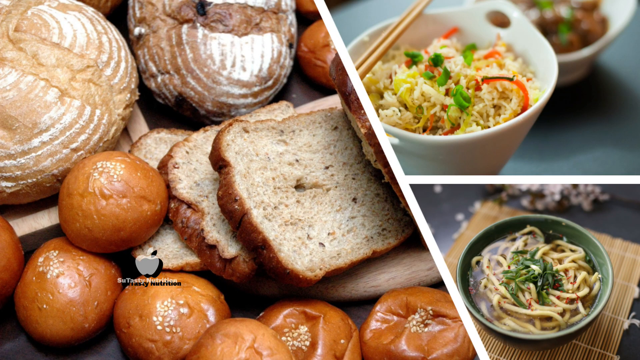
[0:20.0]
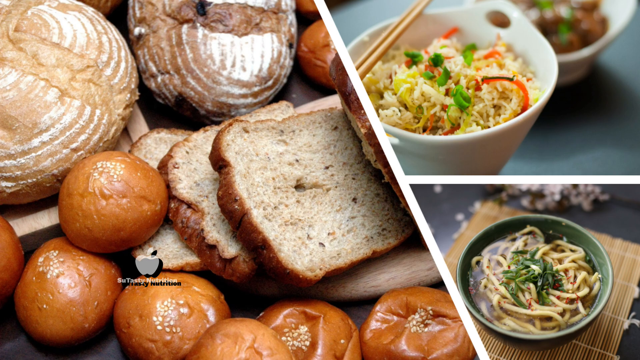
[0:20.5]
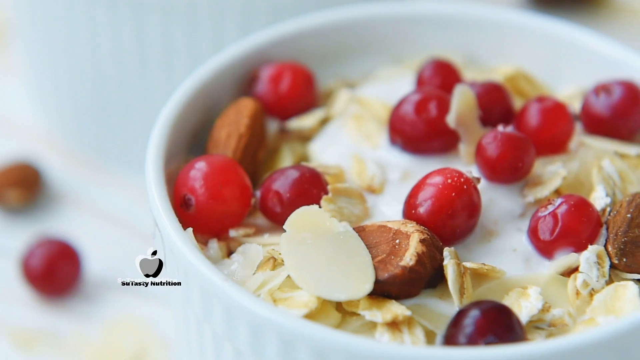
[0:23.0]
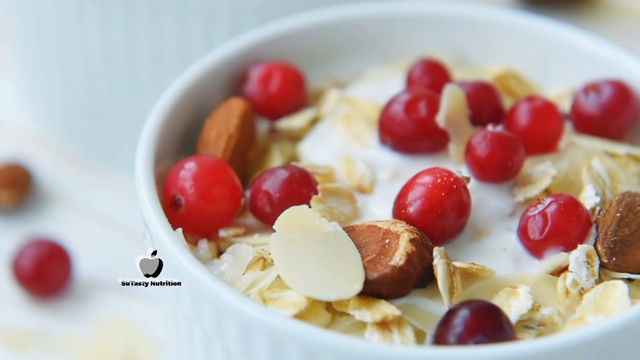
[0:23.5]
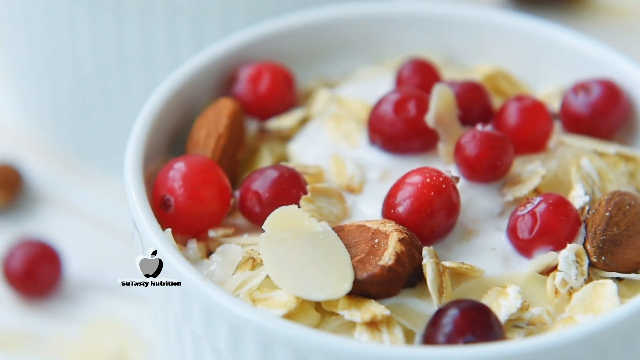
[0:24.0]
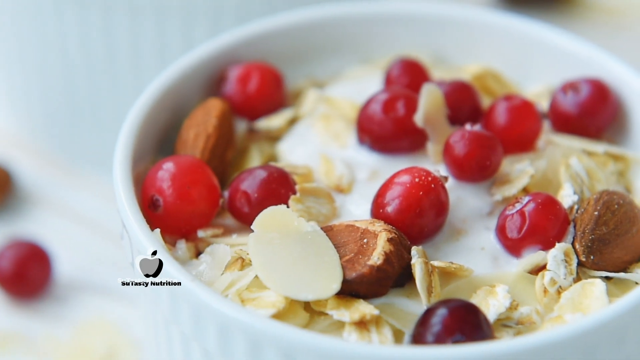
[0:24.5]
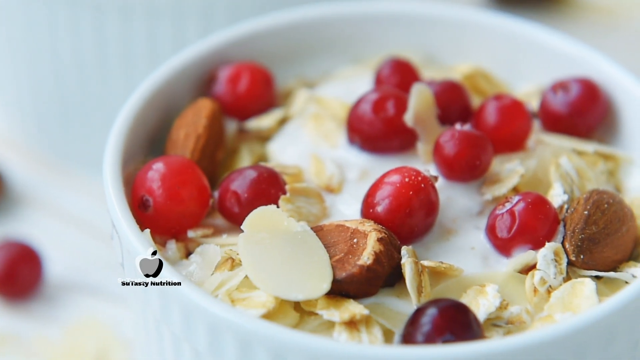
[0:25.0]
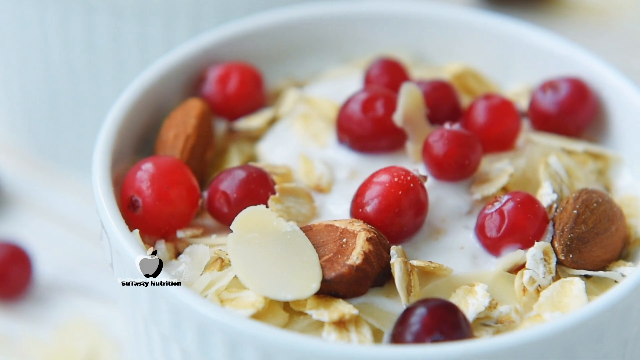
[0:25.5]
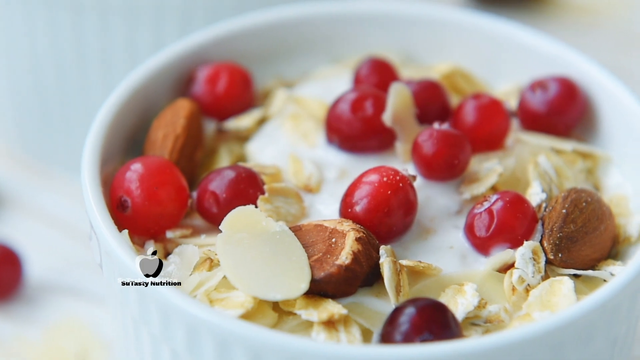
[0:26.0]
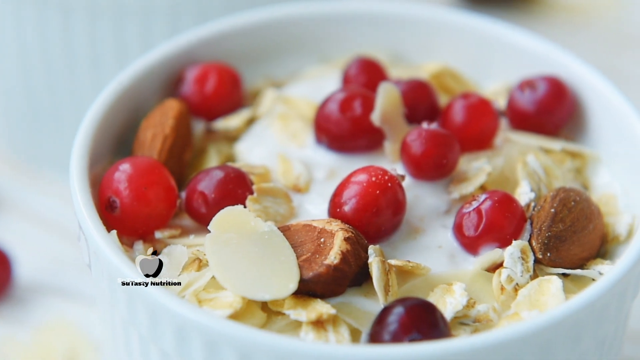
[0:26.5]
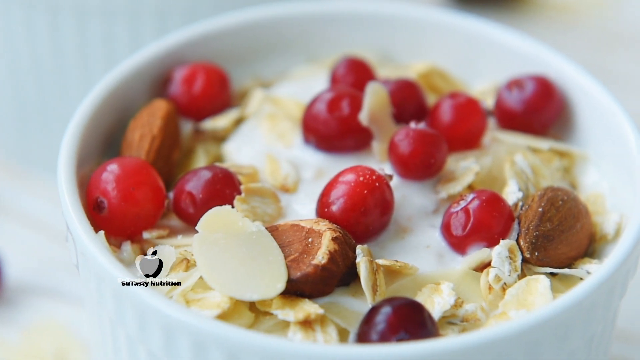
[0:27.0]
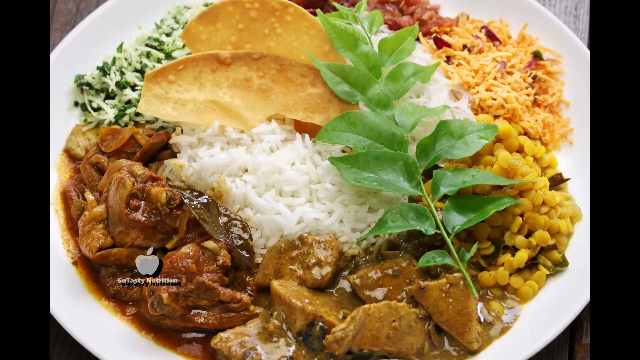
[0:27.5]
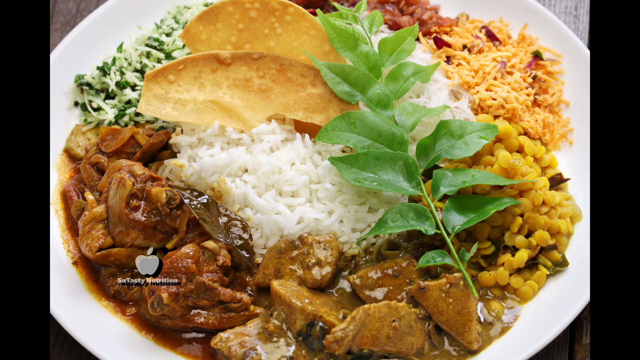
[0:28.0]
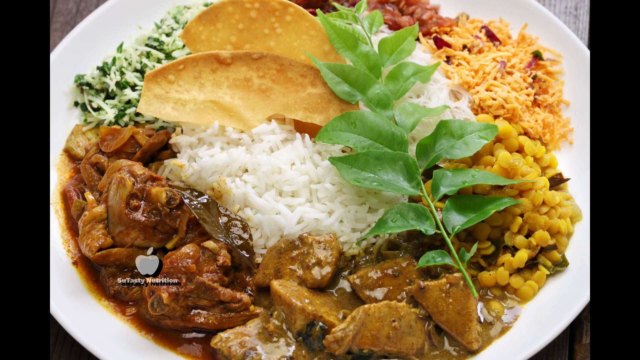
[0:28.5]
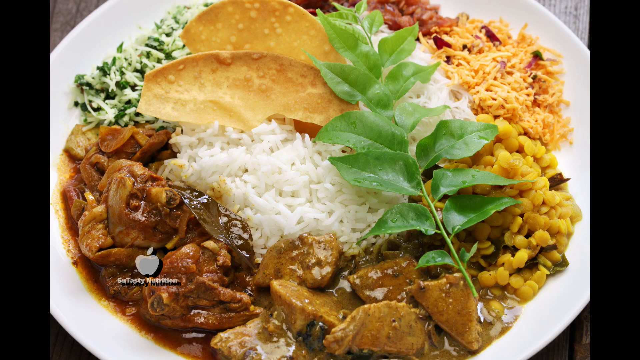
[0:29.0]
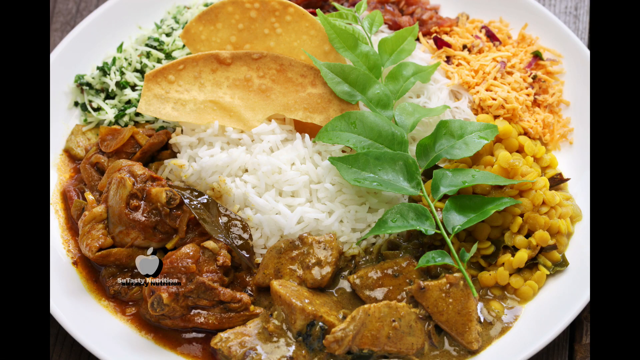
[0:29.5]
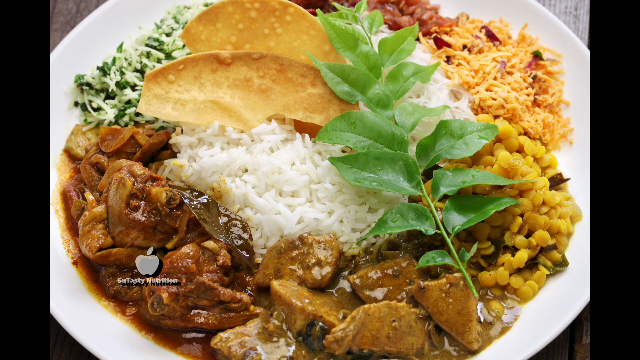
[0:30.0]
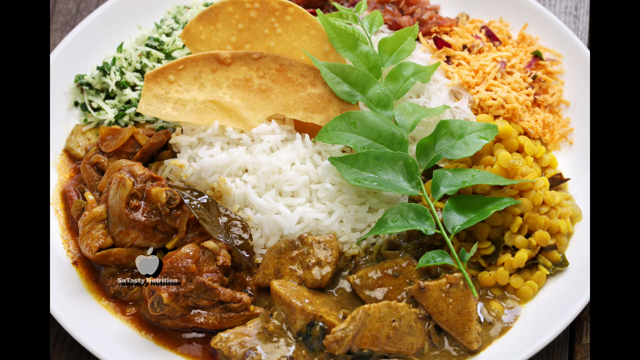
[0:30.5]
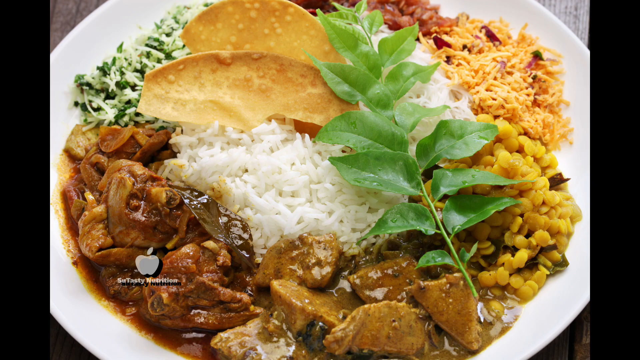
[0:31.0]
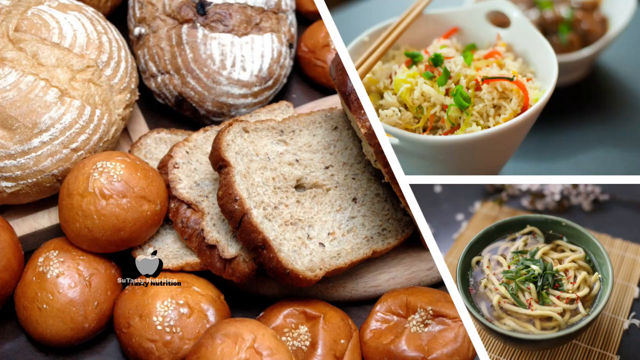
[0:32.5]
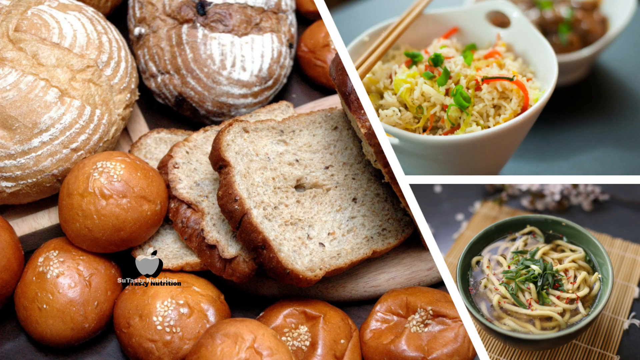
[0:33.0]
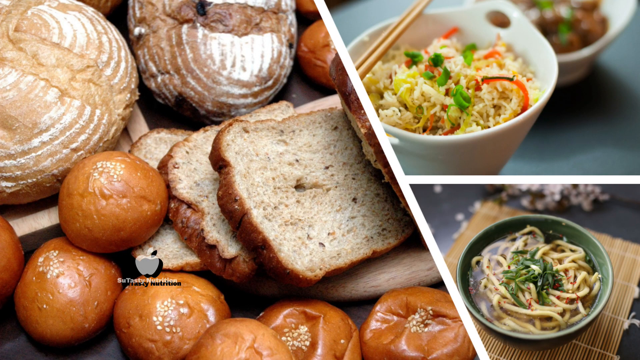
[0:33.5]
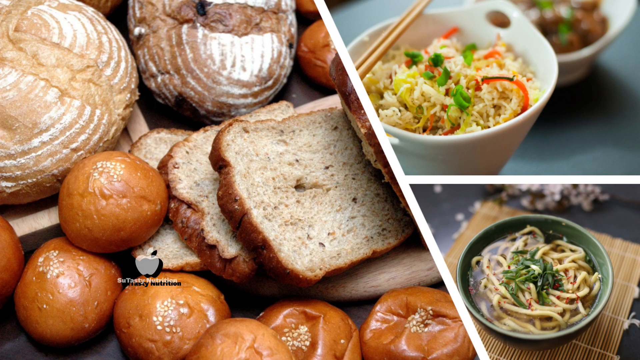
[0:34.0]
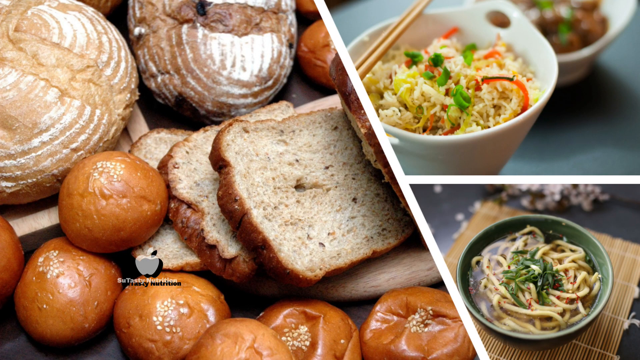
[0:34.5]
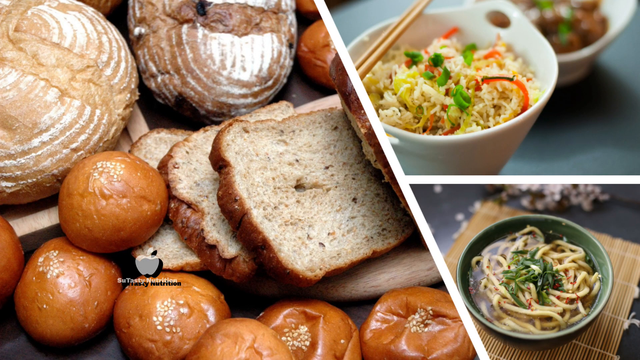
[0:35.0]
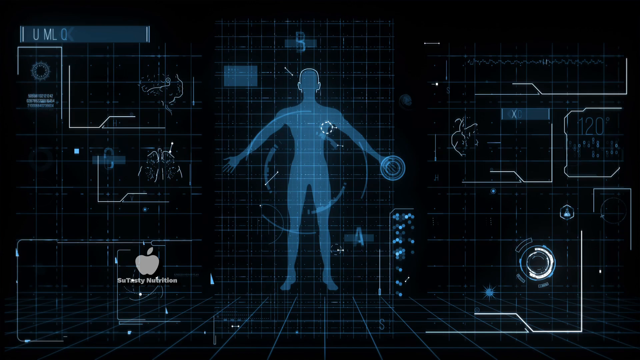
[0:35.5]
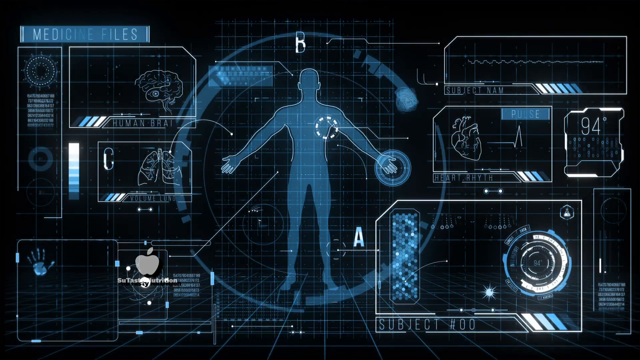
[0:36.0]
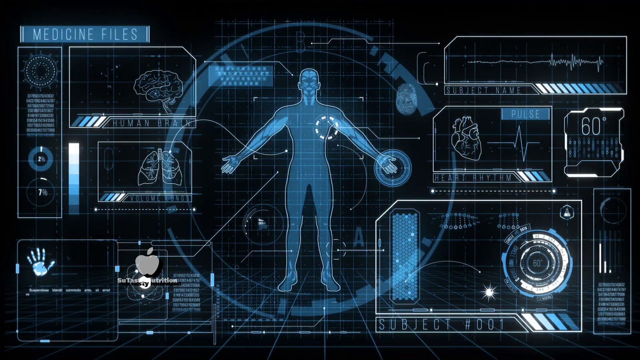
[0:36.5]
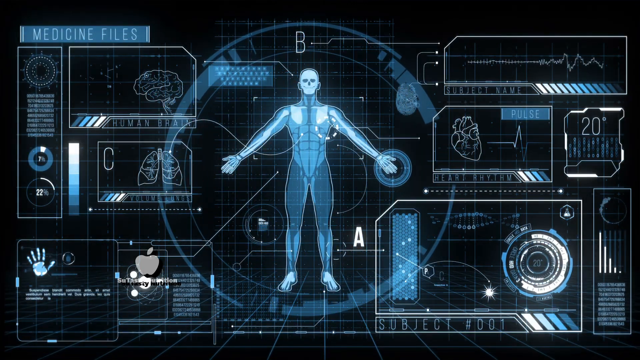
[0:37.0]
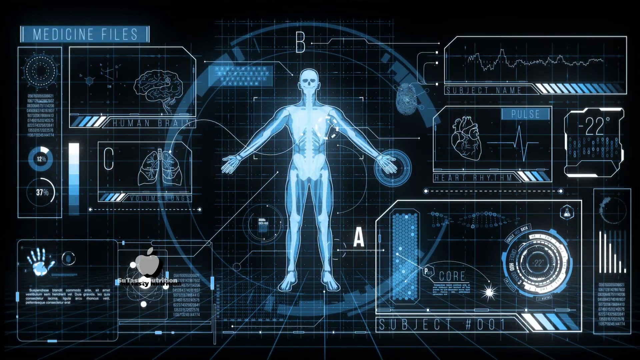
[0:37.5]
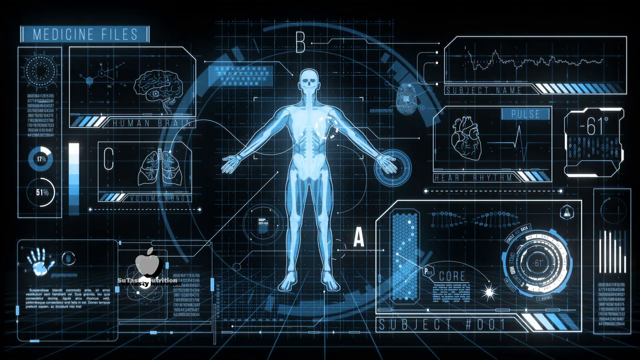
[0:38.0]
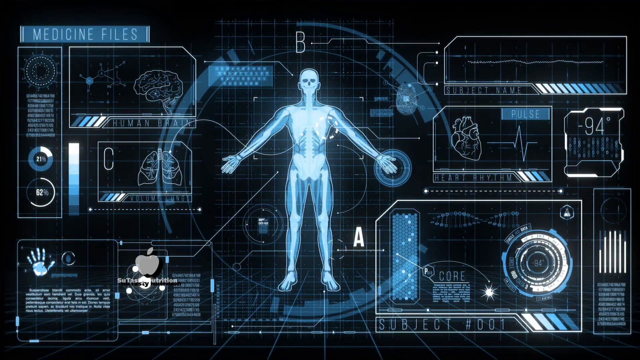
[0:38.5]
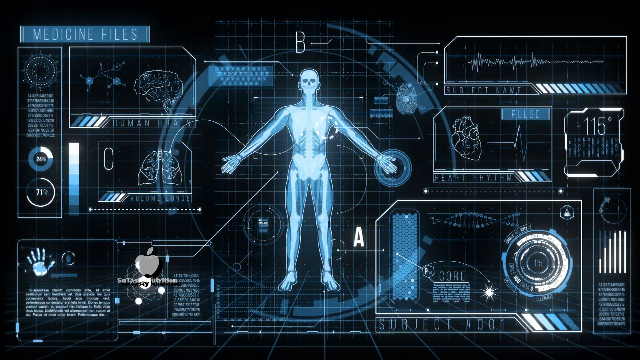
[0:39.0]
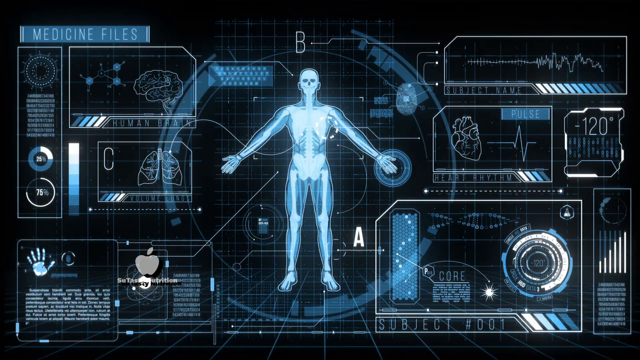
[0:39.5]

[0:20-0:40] A slide shows more carb-rich foods: breads and rolls, a bowl of rice and a bowl of noodles. The screen is split into three, with a large portion showing bread and rolls and two smaller portions. The scene switches to a white bowl on a white background containing probably yogurt, with what look like red berries, maybe cranberries, and almonds inside the dish. Another dish follows: a white plate of rice with some corn or couscous, some kind of protein meat, and a green plant as garnish. The three-part screen of carb-rich foods appears, showing the rolls, the rice and the pasta. The screen then switches to a human body outline illuminated by blue light on a black screen, with many illuminated blue lights throughout its different sections. One label reads "medicine files," and pictures of the brain, the heart and the lungs are illuminated on the diagram.